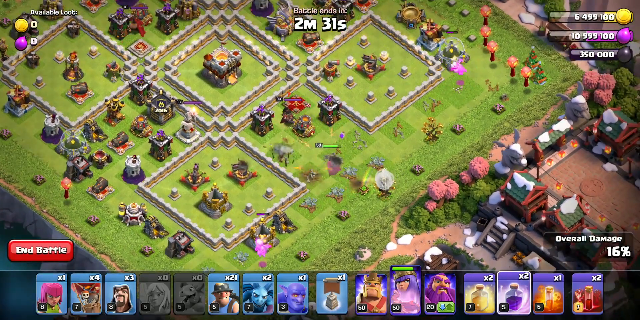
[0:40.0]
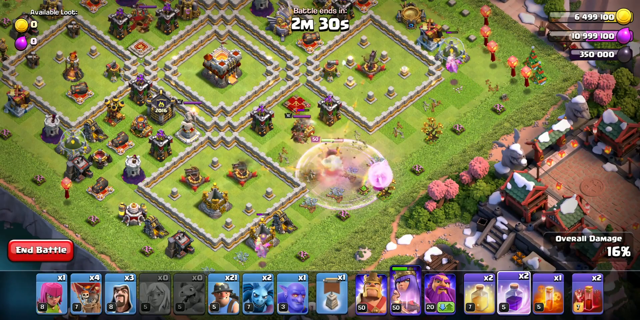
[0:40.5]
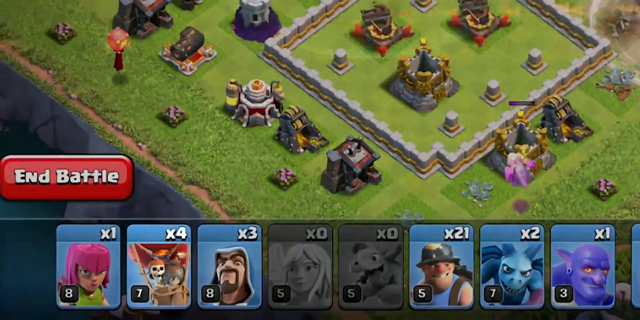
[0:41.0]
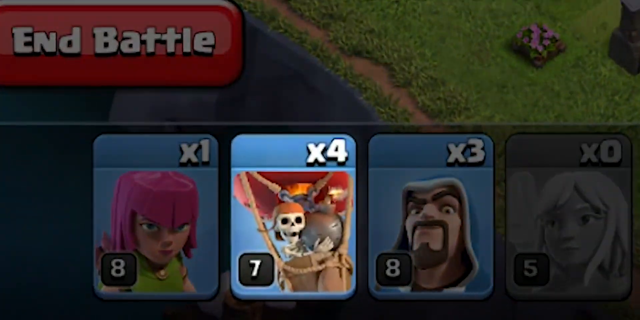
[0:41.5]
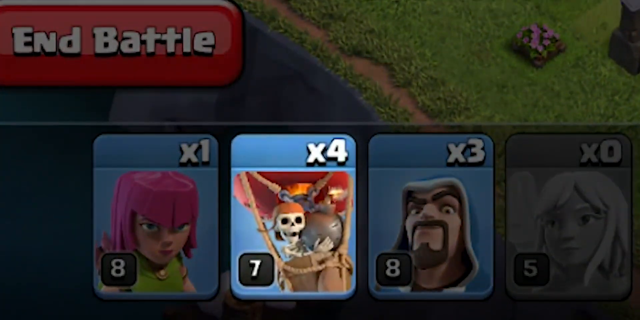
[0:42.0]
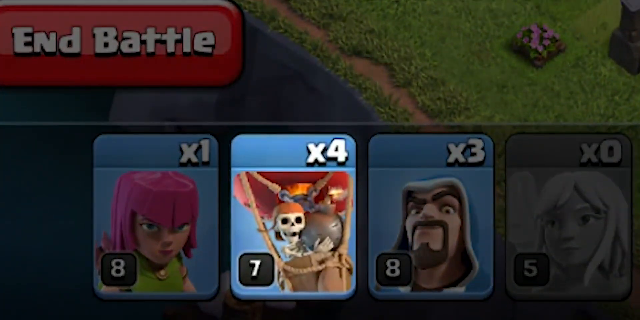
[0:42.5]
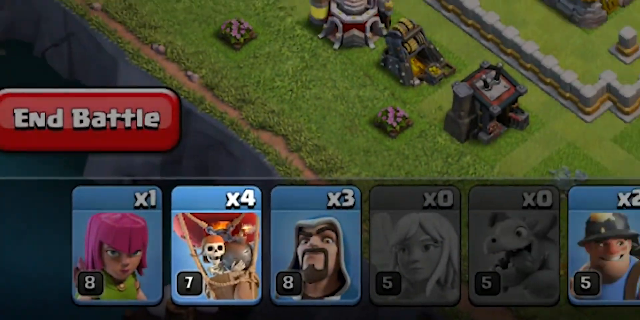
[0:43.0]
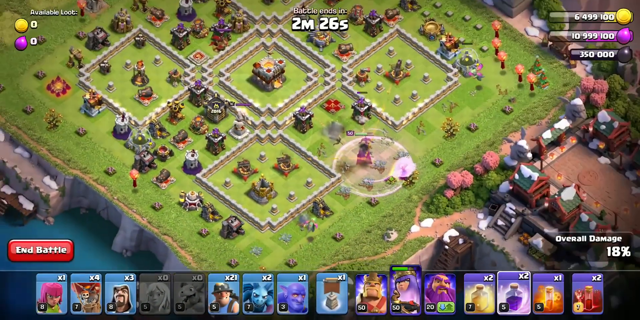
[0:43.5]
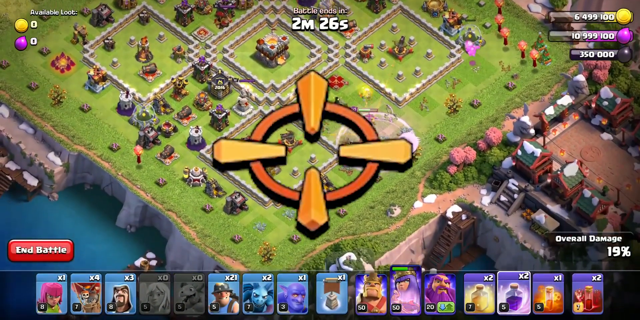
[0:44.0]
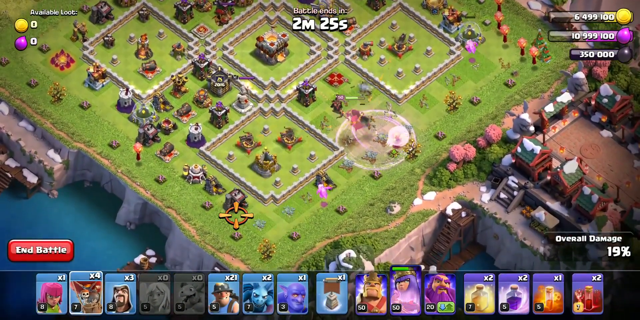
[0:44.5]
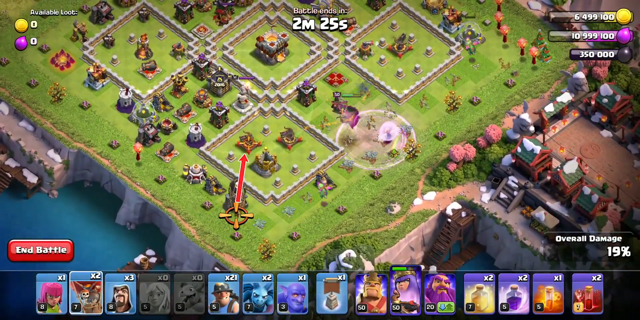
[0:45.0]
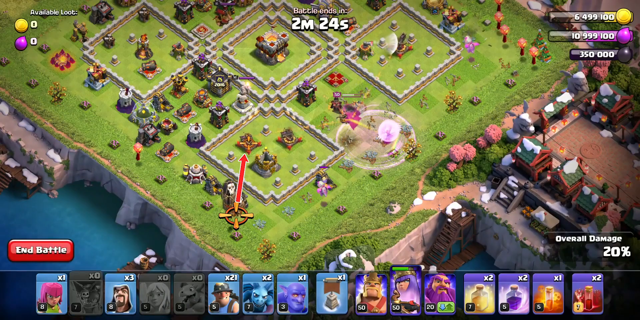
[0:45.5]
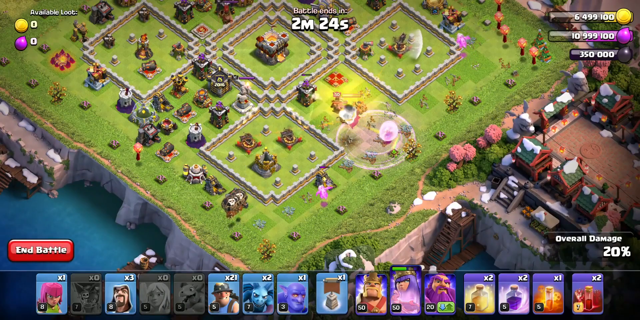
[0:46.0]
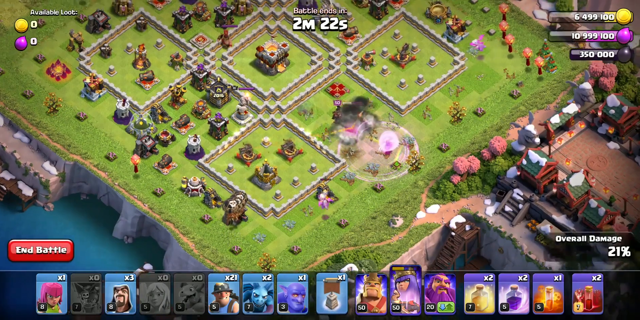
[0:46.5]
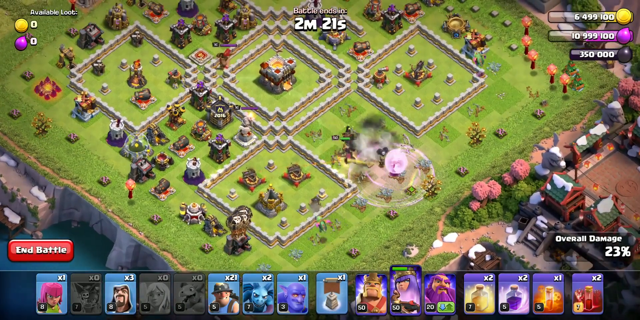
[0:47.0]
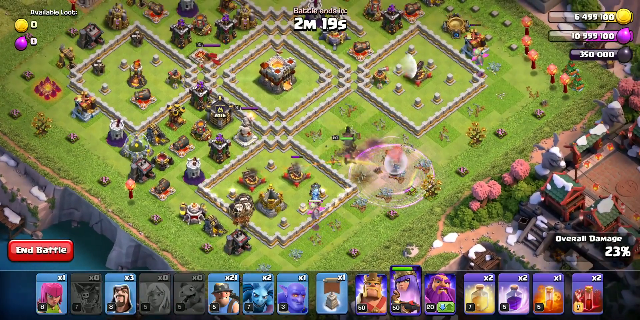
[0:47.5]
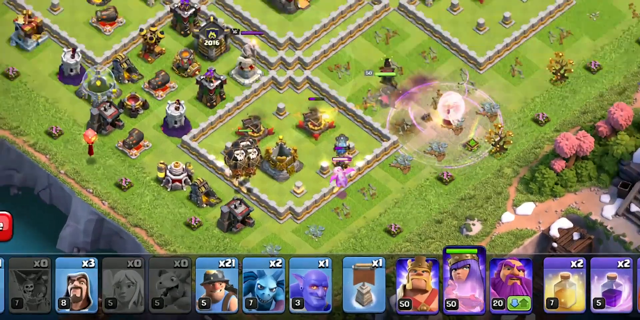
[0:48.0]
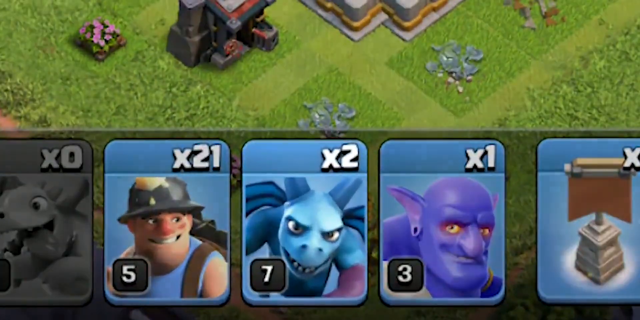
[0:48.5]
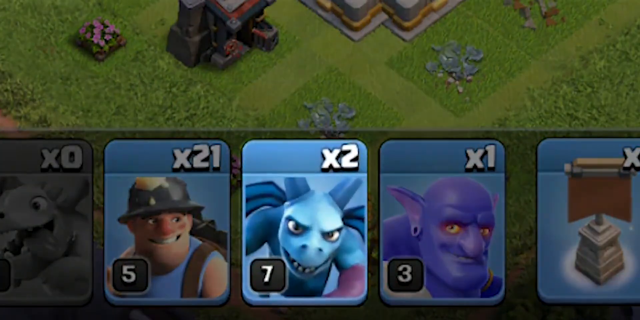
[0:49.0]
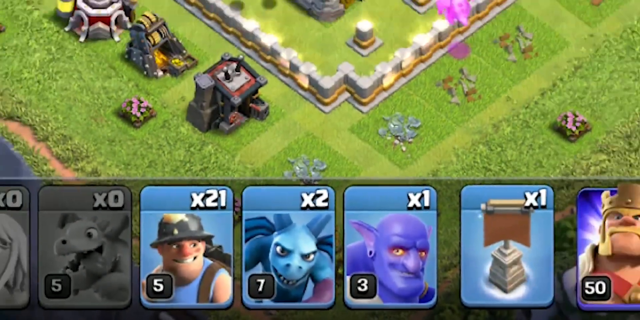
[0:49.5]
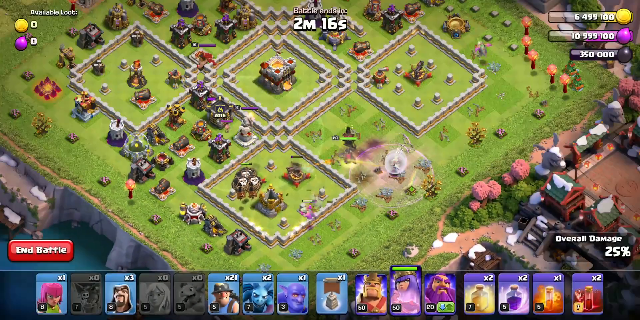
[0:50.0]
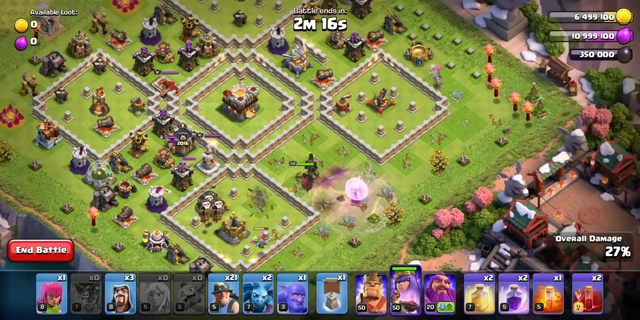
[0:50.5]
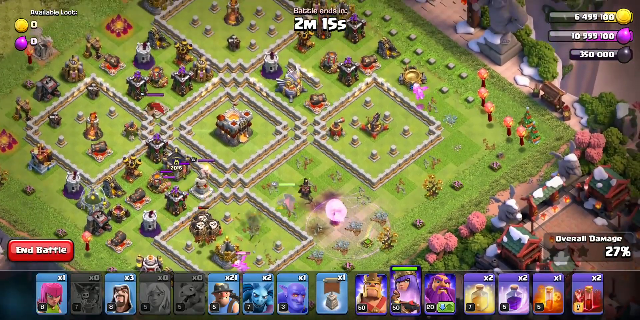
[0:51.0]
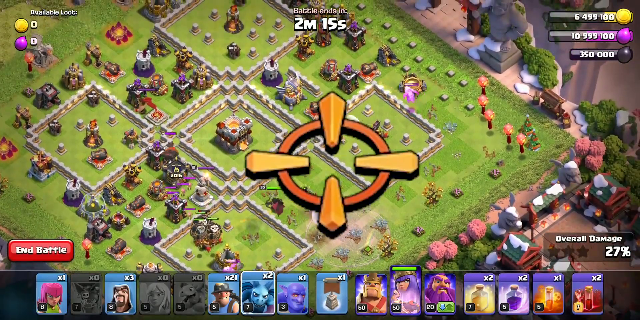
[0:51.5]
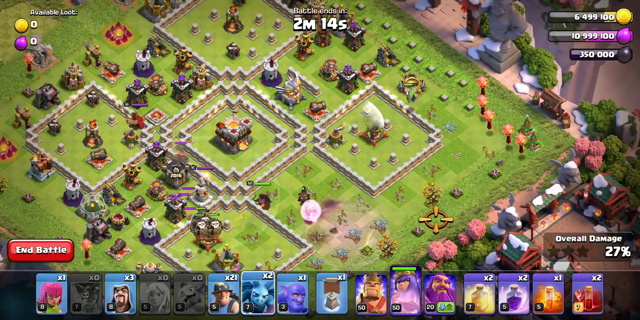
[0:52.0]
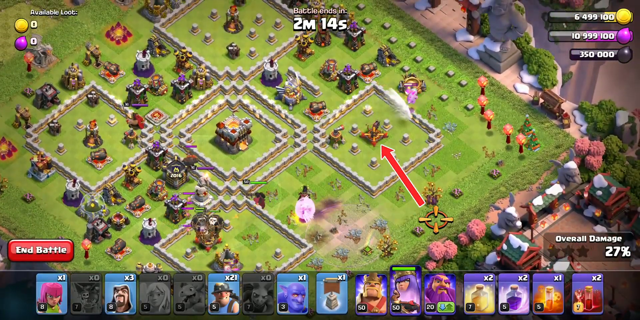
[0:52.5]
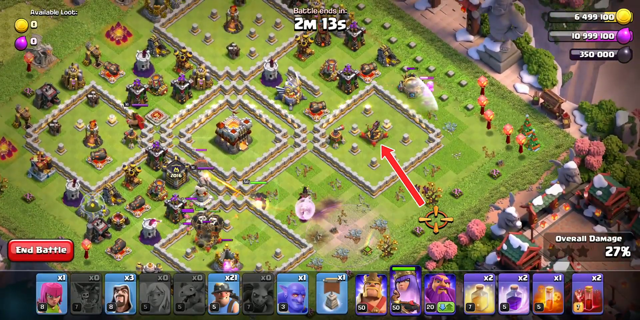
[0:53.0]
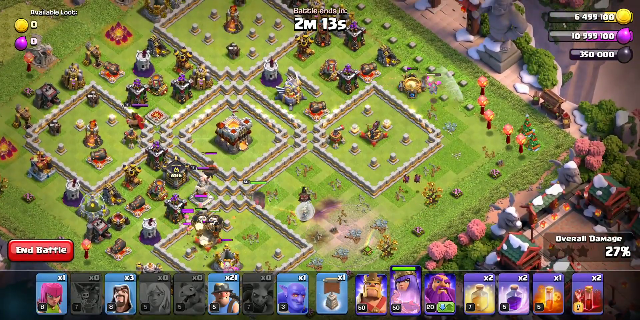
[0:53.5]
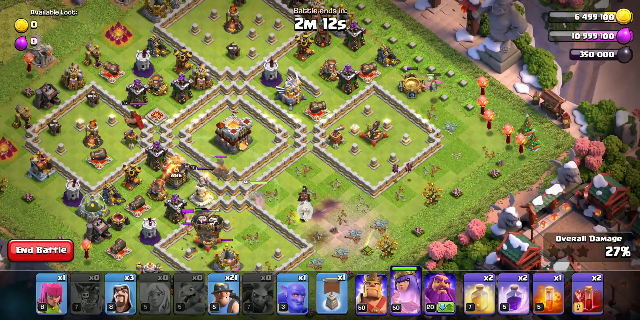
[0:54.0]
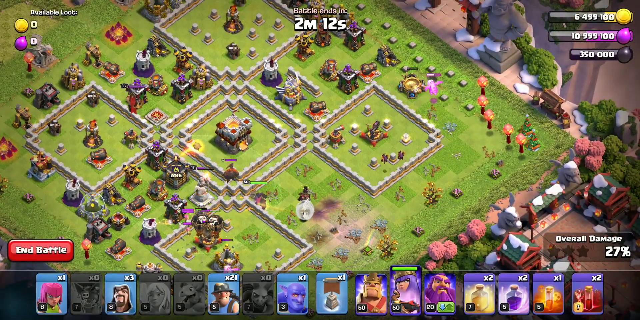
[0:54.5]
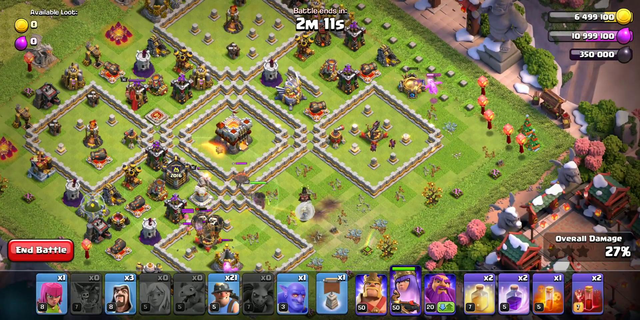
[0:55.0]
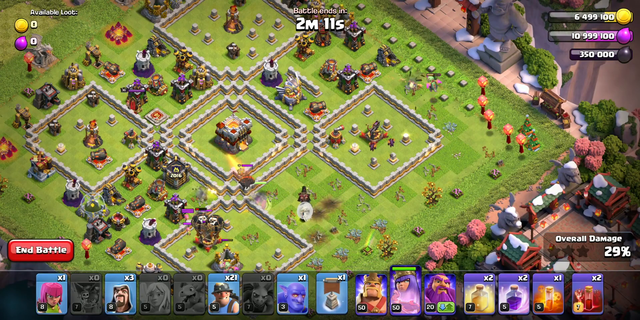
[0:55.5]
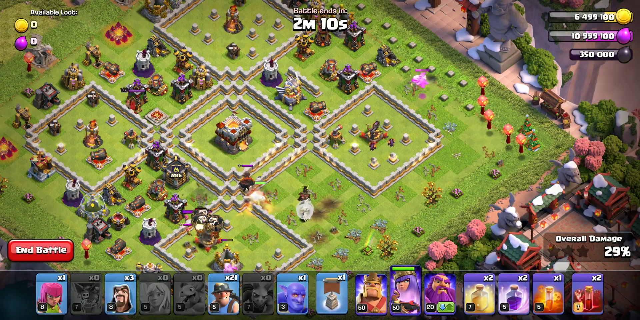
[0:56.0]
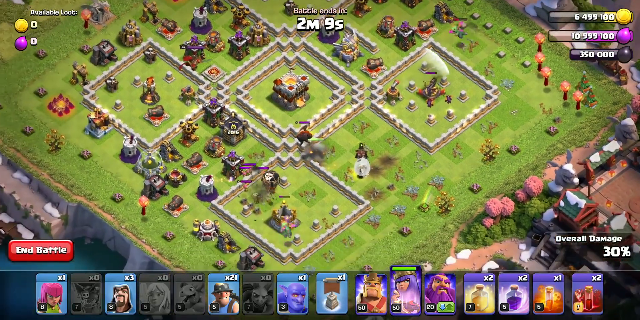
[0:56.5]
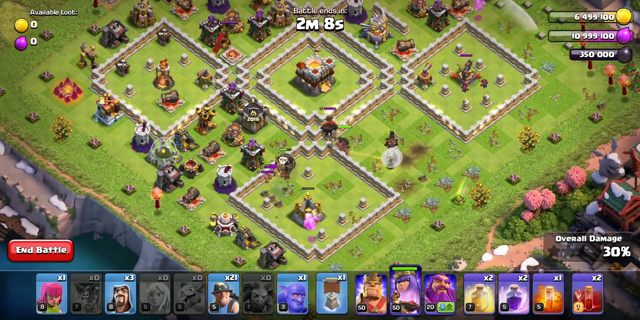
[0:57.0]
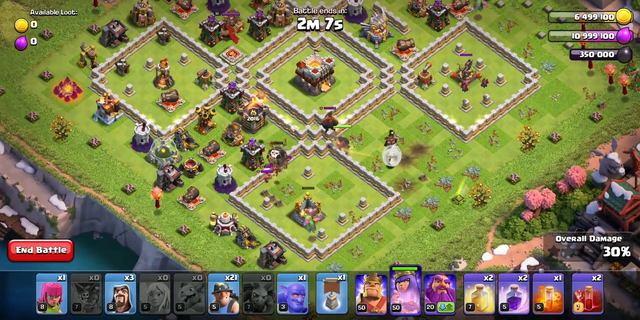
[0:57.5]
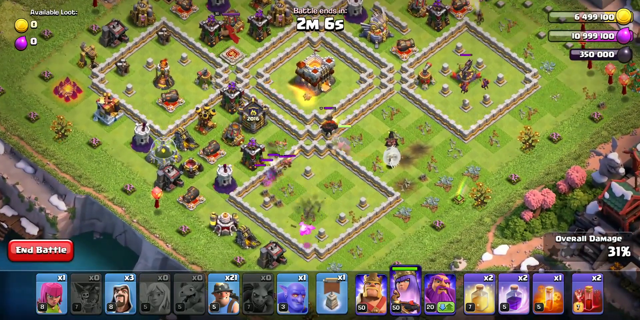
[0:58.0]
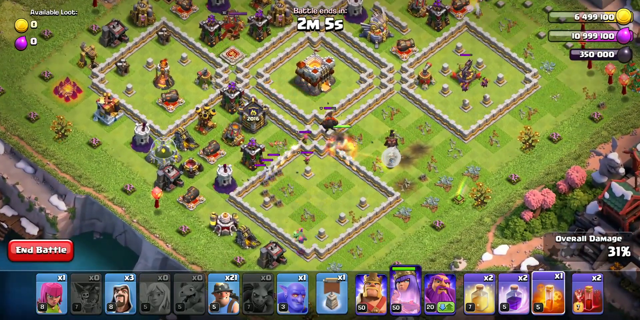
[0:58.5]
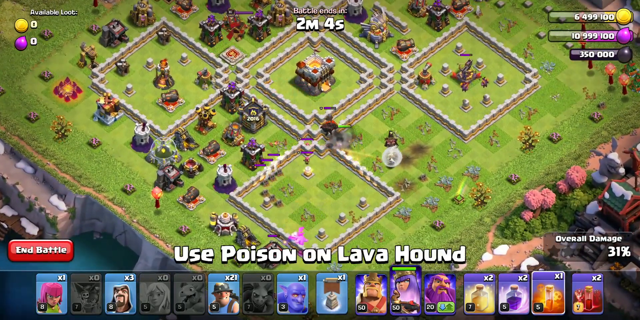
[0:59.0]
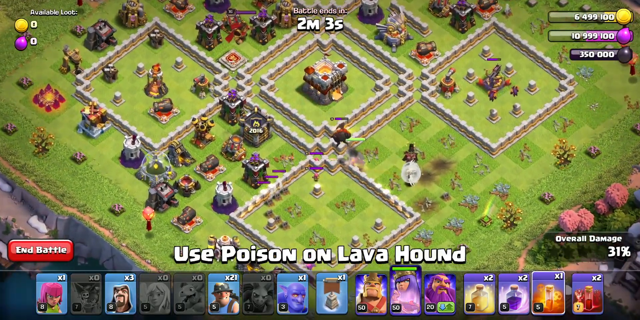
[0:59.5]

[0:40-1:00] A close-up shows what appears to be a skeleton holding a bomb, with about four of those units left. More destruction follows across the playing field as more towers are depleted, while the timer goes from about 2 minutes 40 seconds down to about 2 minutes 15 seconds. The player uses what appears to be a potion of Lava Hound. Their units include several wall breakers, which are the skeletons with the bomb, along with archers, a unit with pink hair, and Minion Prince. The placed characters destroy and take land from the towers and the player's defensive system, and several buildings are destroyed.